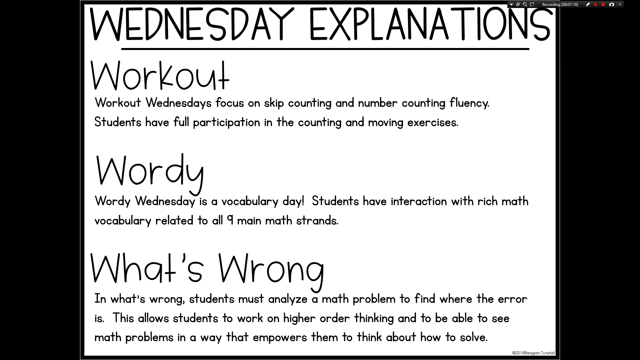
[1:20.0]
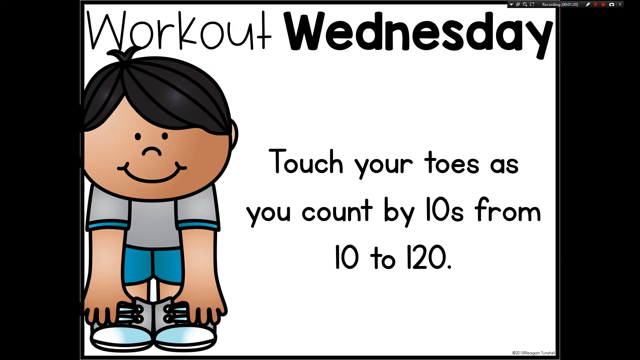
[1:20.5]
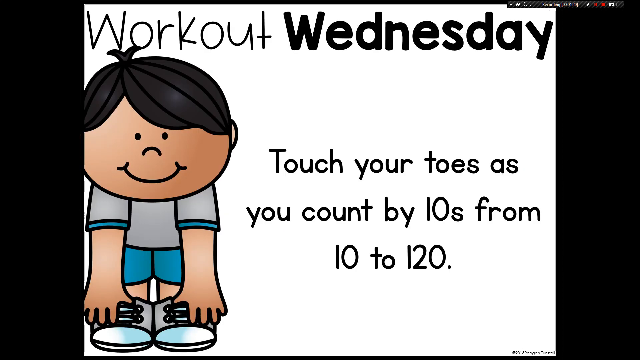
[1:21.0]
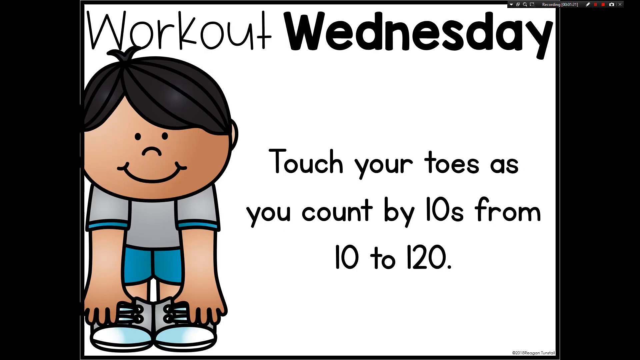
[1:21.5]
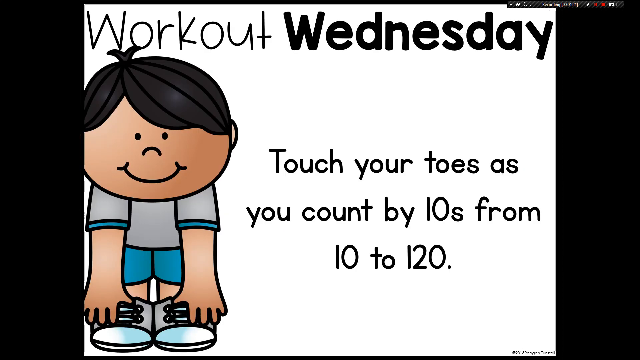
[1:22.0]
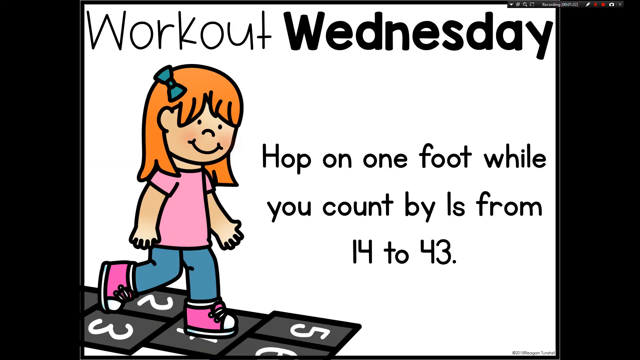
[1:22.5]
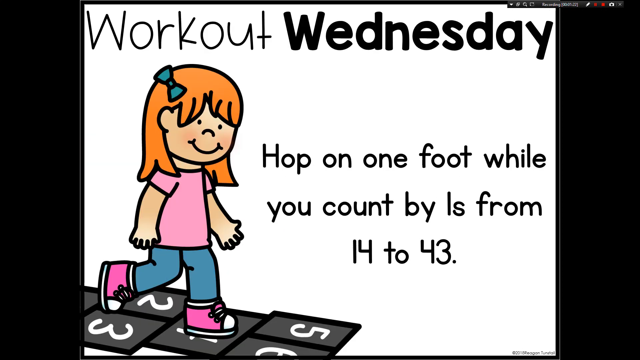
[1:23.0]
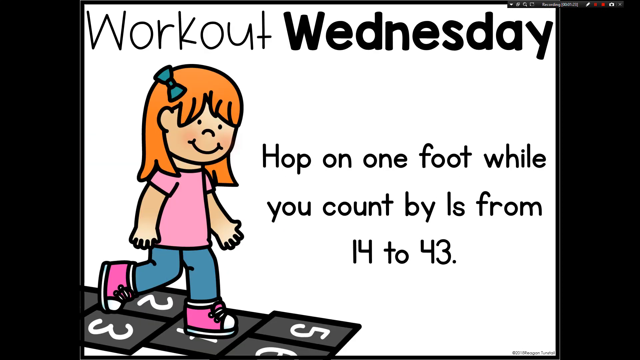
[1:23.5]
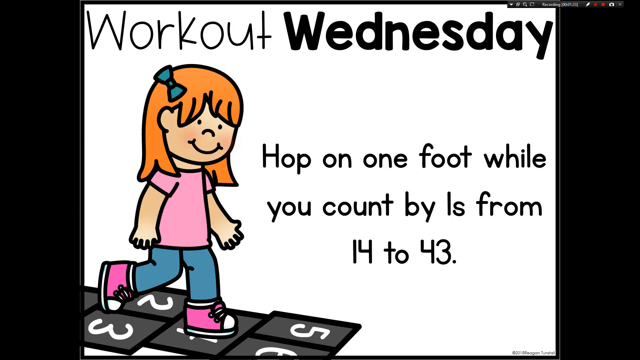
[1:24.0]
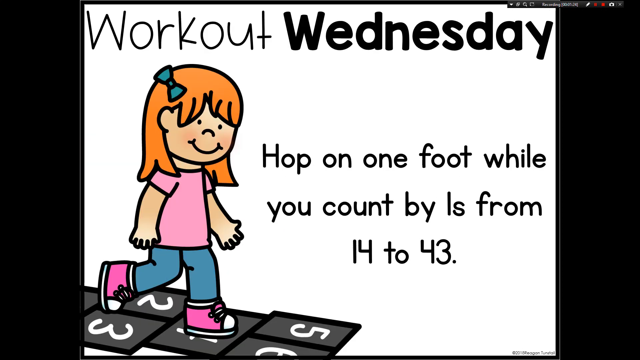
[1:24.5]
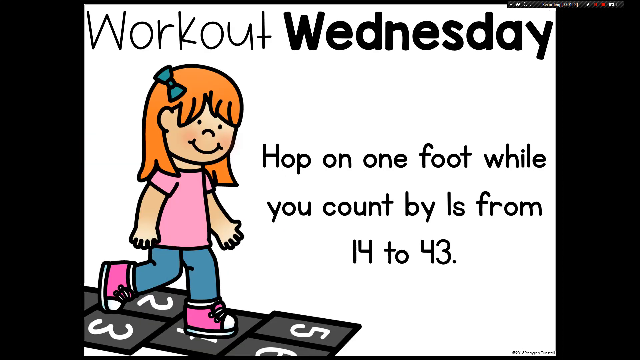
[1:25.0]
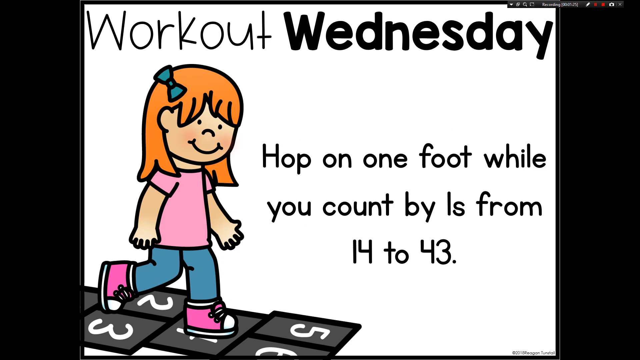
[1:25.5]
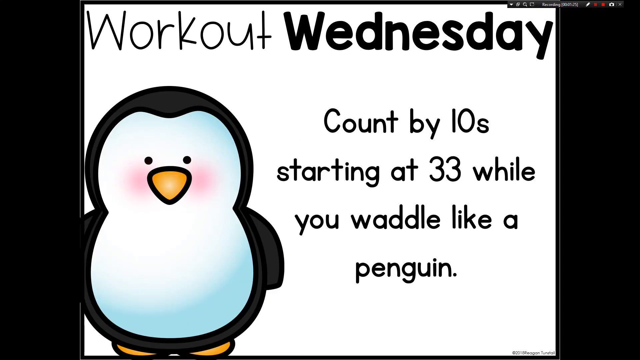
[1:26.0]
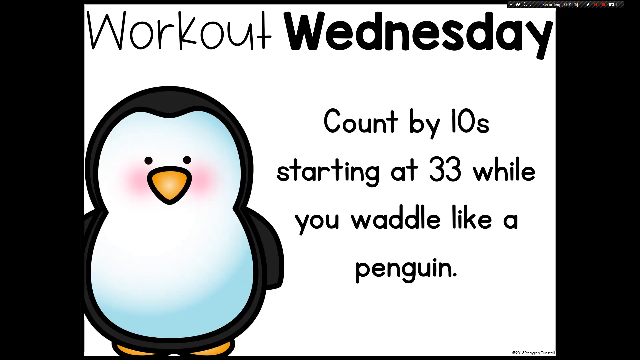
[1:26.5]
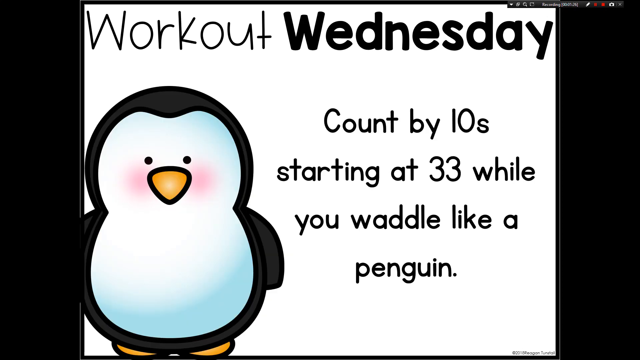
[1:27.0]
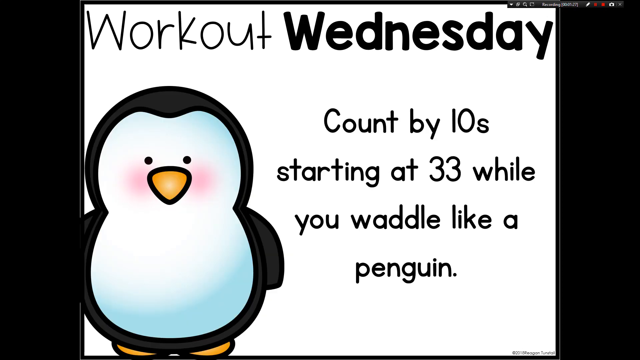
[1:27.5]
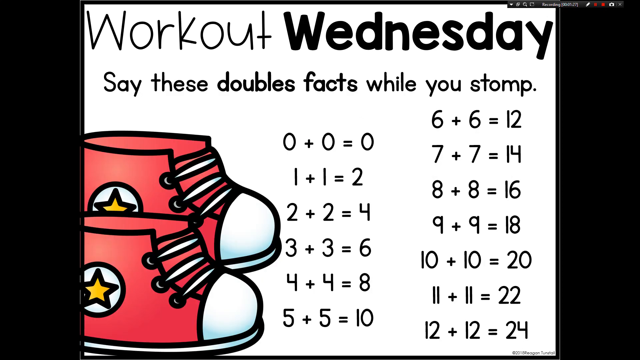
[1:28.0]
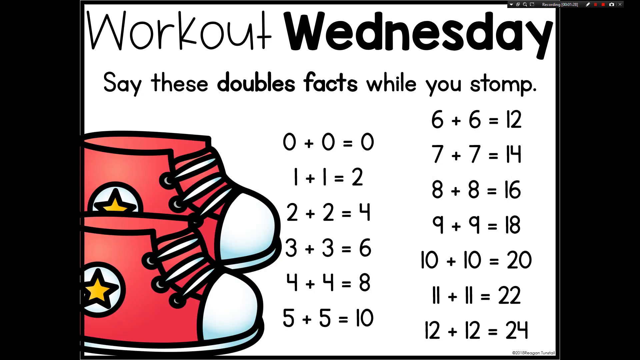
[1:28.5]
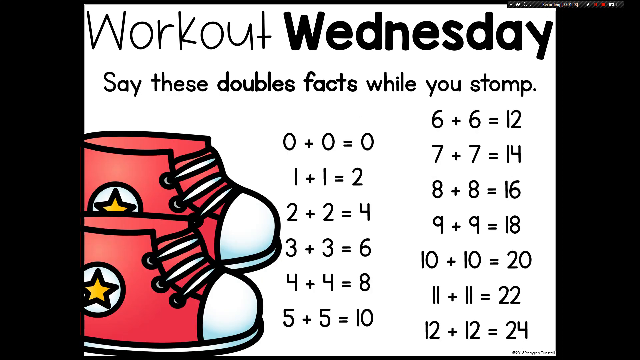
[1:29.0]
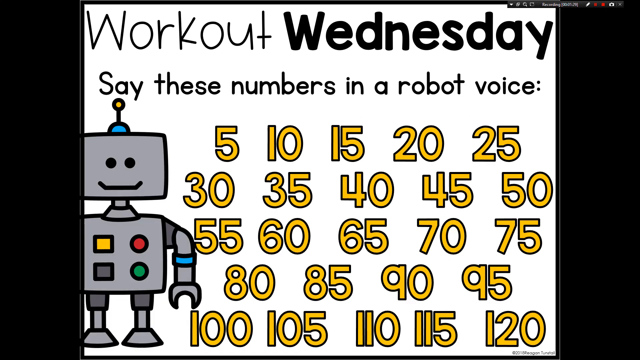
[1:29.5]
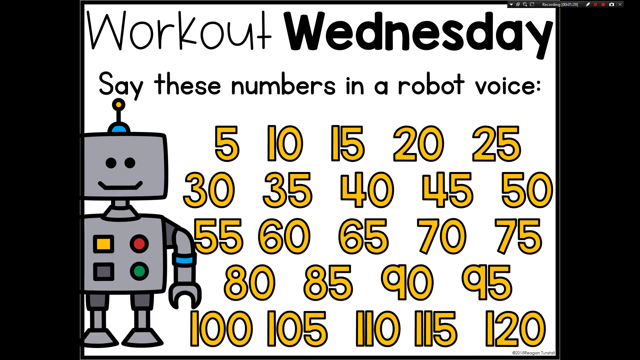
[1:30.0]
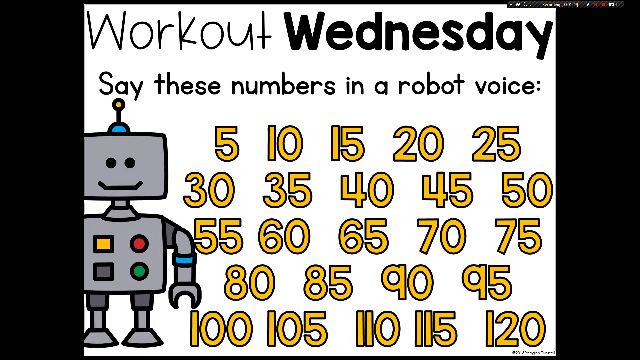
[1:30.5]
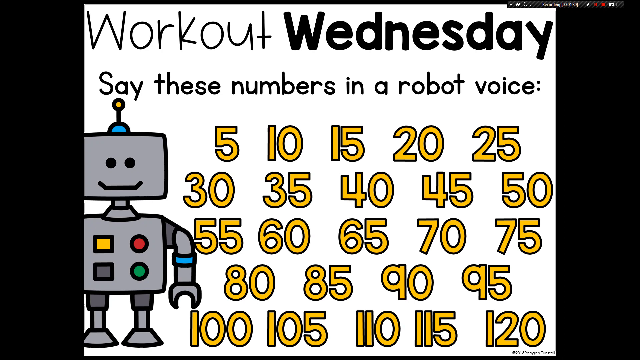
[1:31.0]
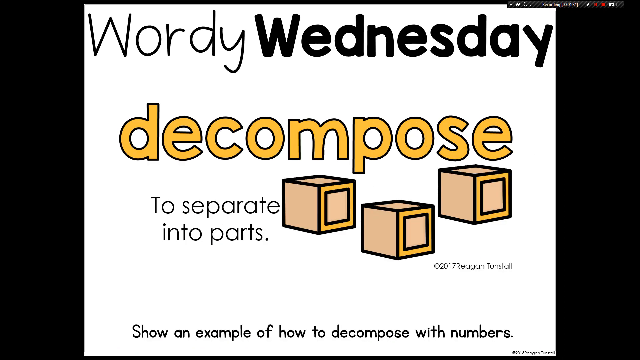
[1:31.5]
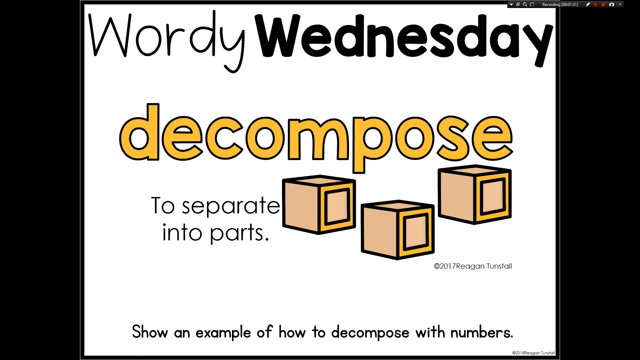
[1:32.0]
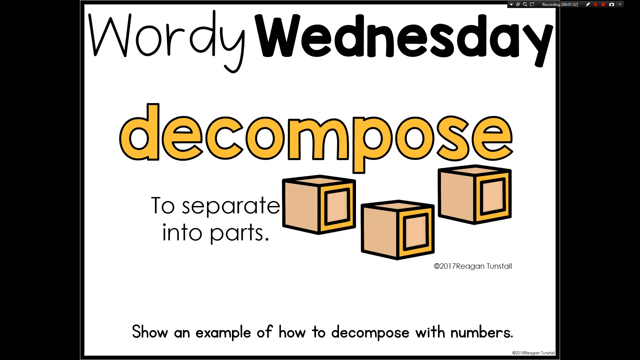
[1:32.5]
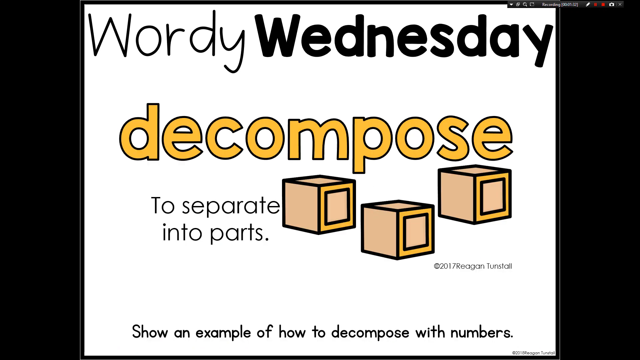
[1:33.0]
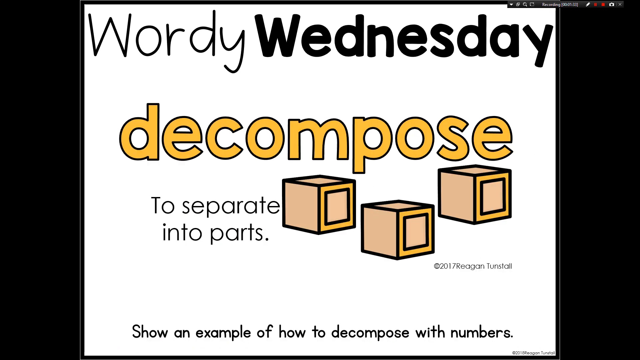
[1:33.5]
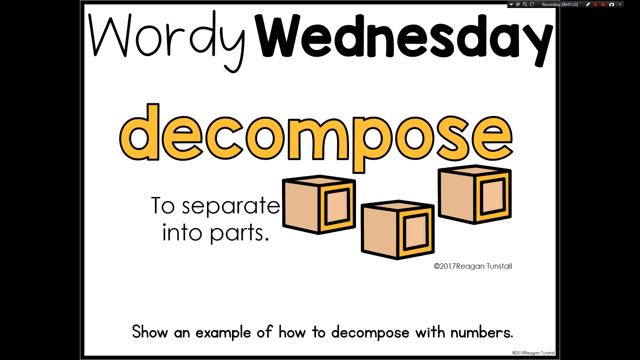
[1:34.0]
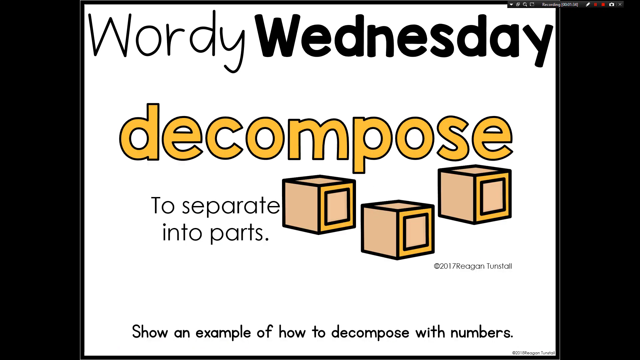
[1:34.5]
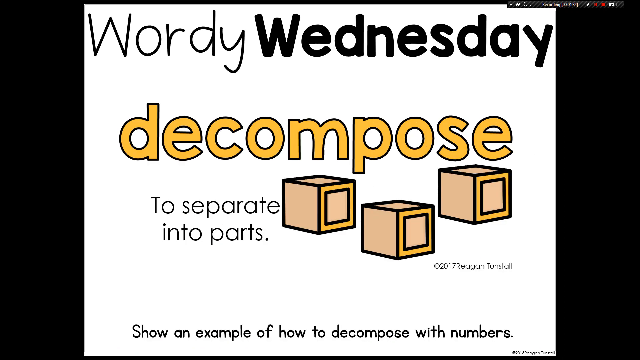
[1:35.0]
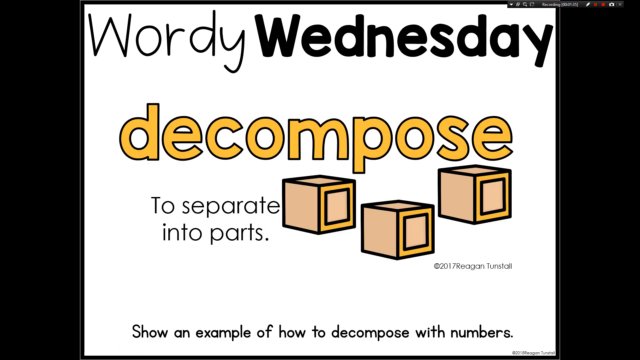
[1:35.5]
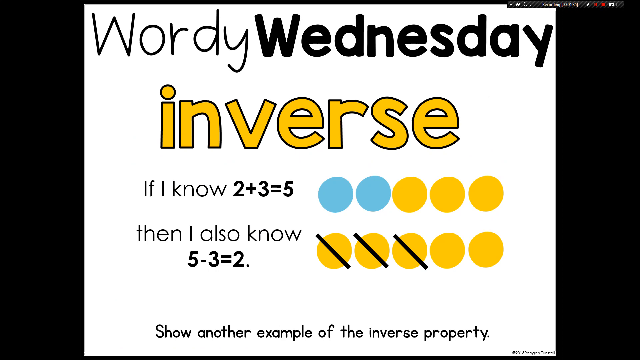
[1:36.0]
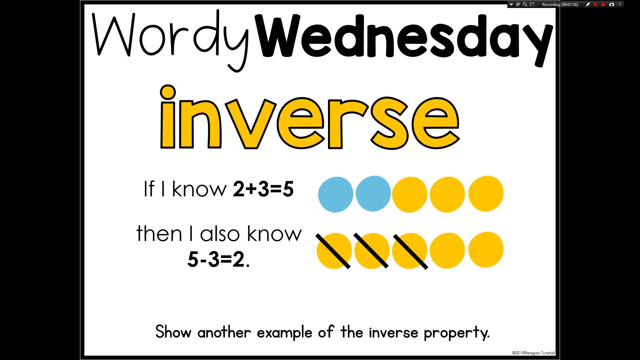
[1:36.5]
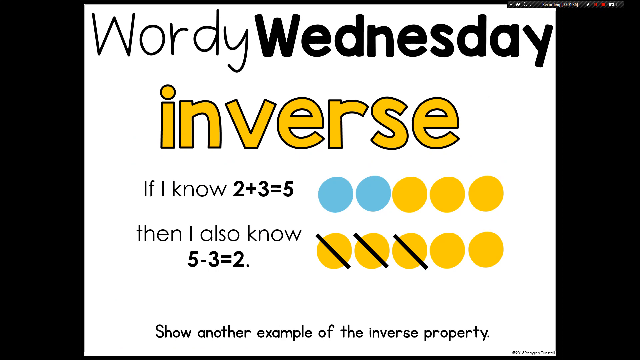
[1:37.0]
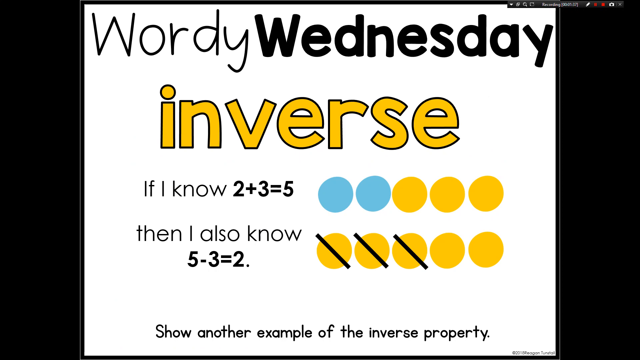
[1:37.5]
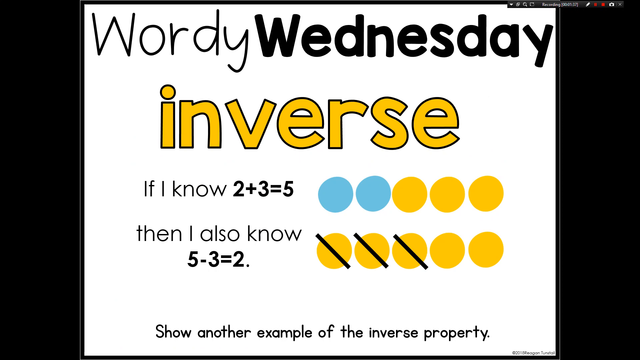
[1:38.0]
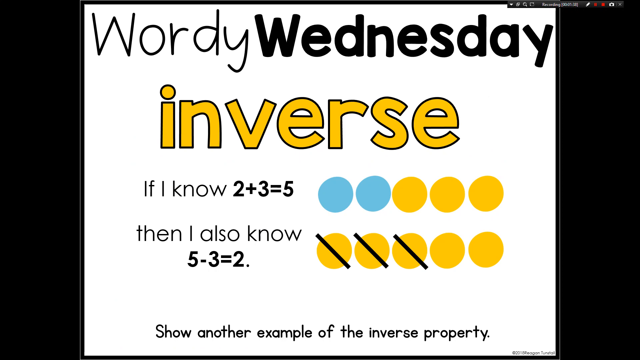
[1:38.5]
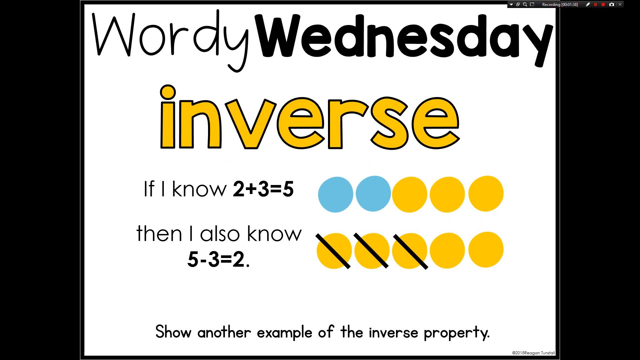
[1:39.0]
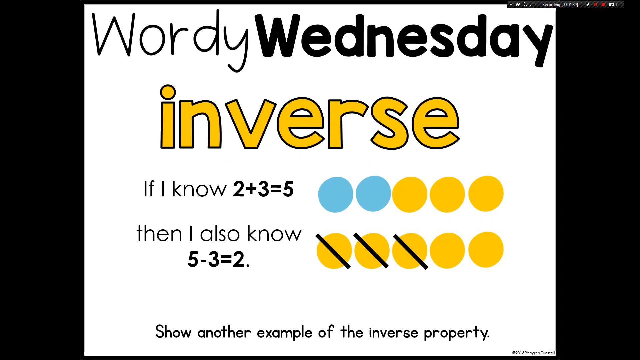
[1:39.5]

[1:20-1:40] The "Wednesday explanations" slide reads "Students have full participation in the counting and moving exercises" and notes that in "What's wrong" students must analyze the math problem and find where the error is. Then "Workout Wednesday" prompts appear: "touch your toes as you count by 10s from 10 to 120", "Hop on one foot while you count by ones from 14 to 43", "count by 10, start at 33 while you waddle like a penguin", "say these double facts while you stomp" and "Say these numbers in a robot voice". A "Wordy Wednesday" card shows "Decompose: to separate into parts", followed by "inverse" with "If I know 2 plus 3 equals 5, then I also know...".